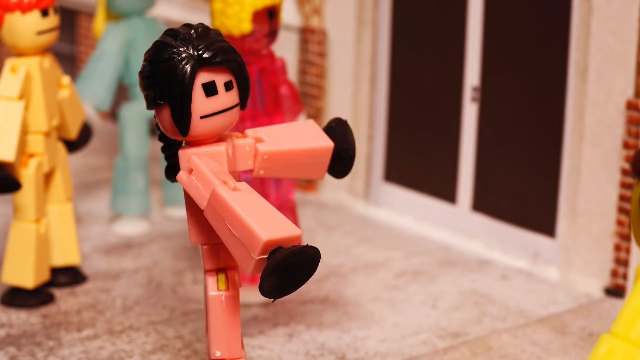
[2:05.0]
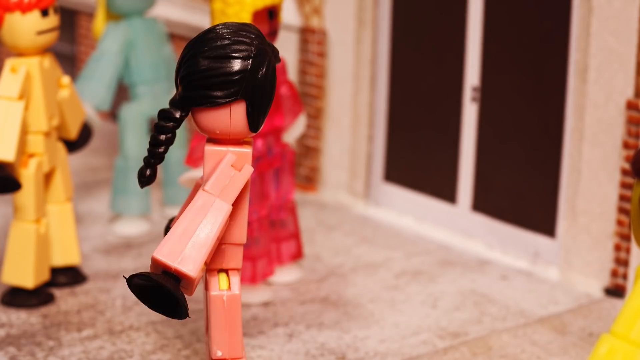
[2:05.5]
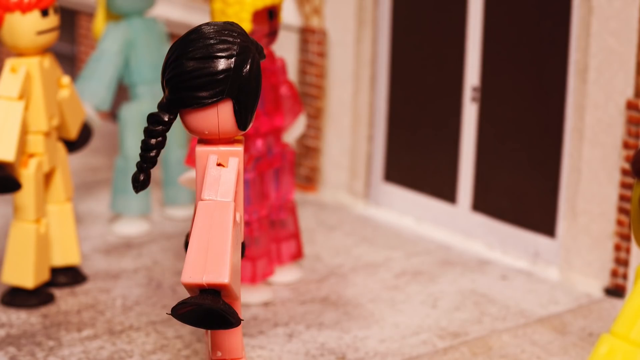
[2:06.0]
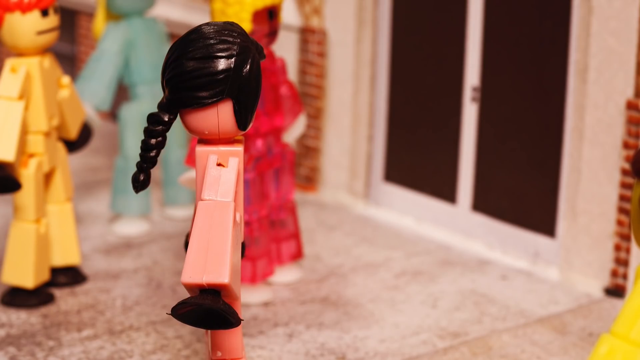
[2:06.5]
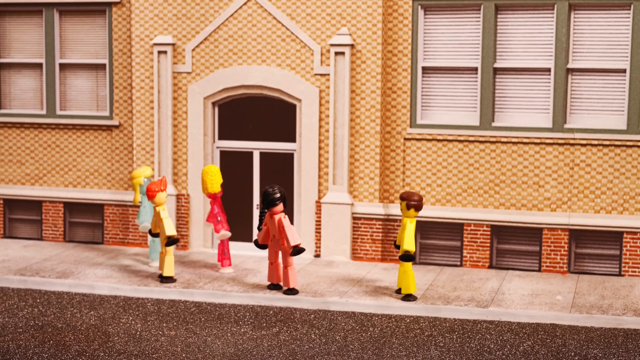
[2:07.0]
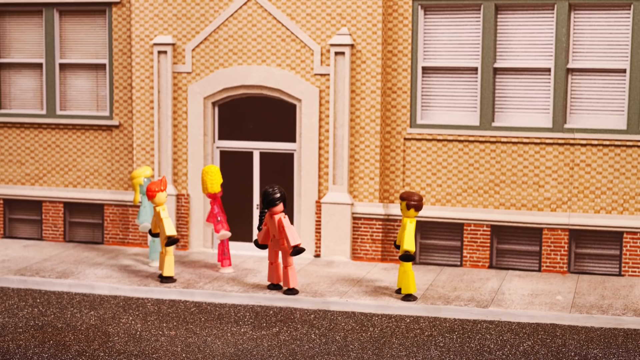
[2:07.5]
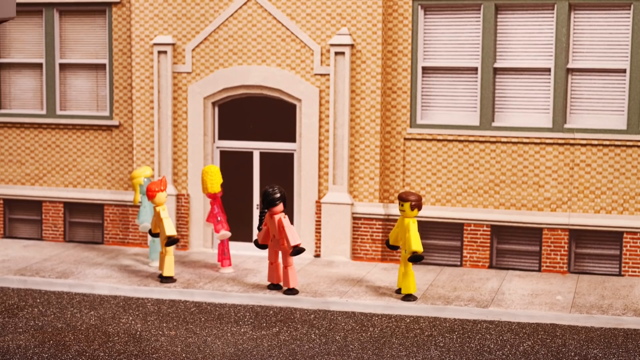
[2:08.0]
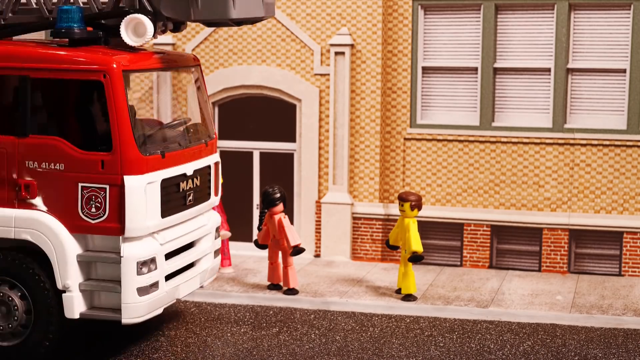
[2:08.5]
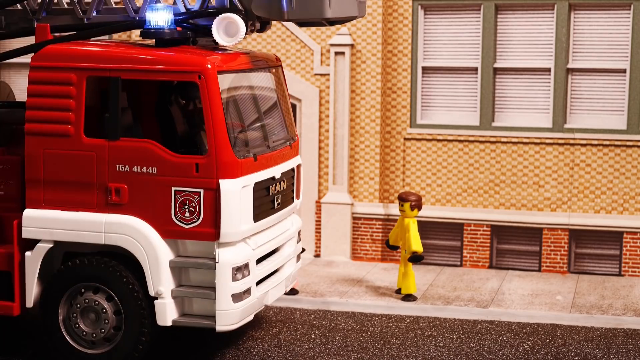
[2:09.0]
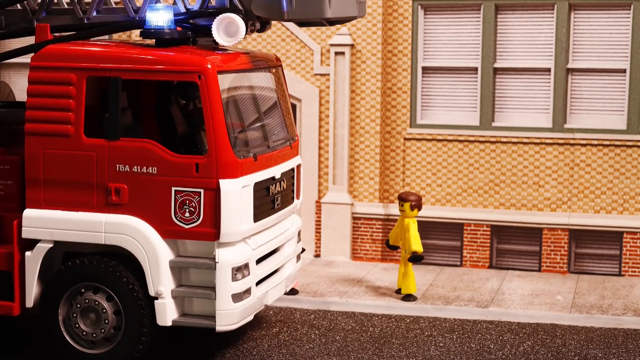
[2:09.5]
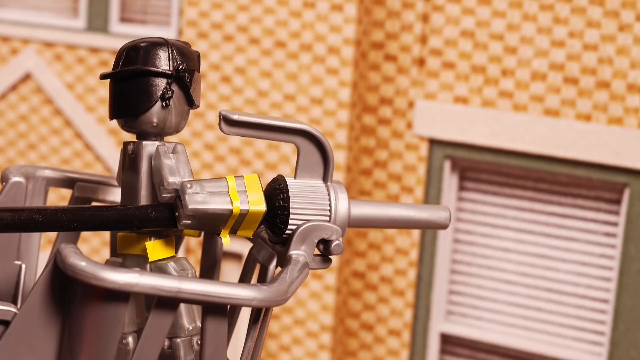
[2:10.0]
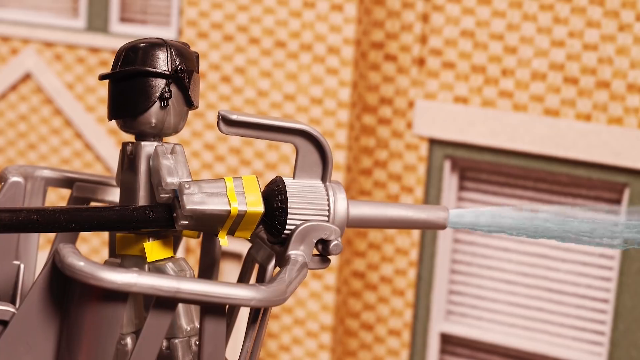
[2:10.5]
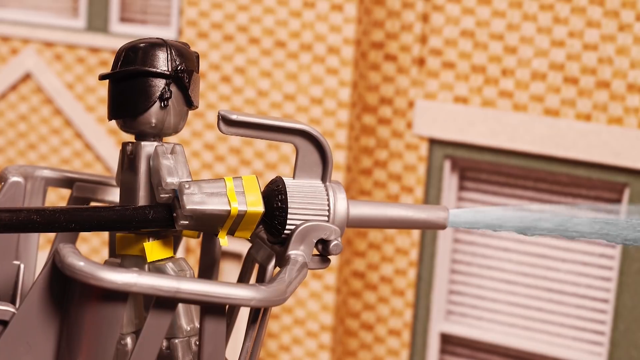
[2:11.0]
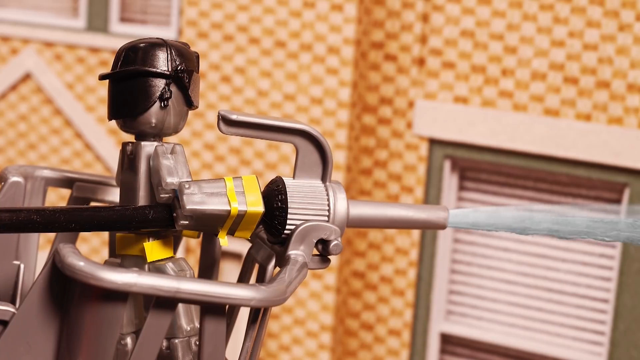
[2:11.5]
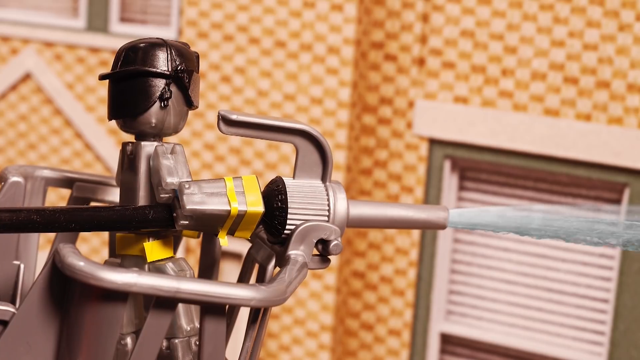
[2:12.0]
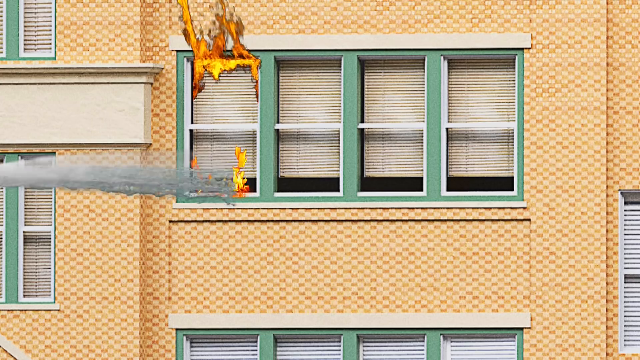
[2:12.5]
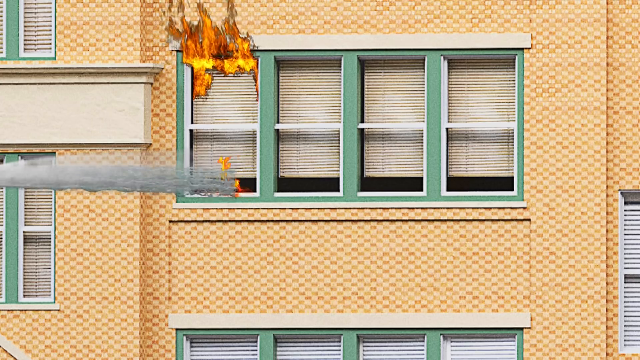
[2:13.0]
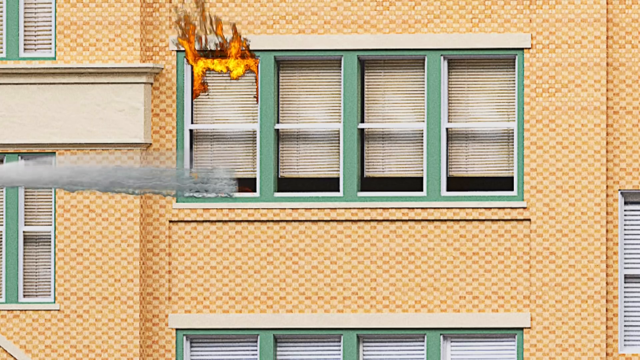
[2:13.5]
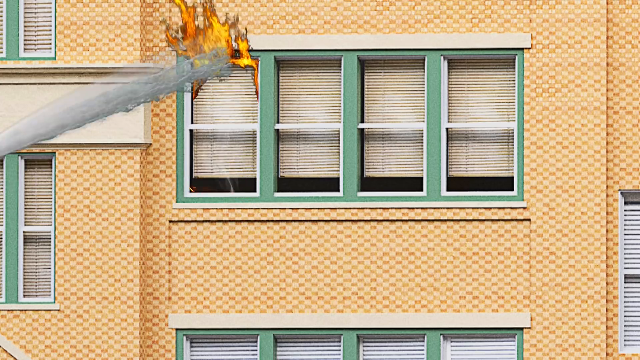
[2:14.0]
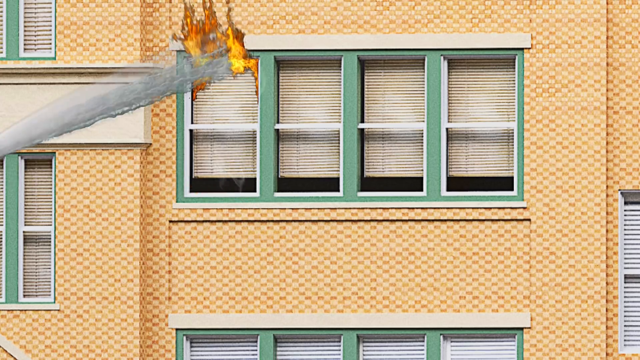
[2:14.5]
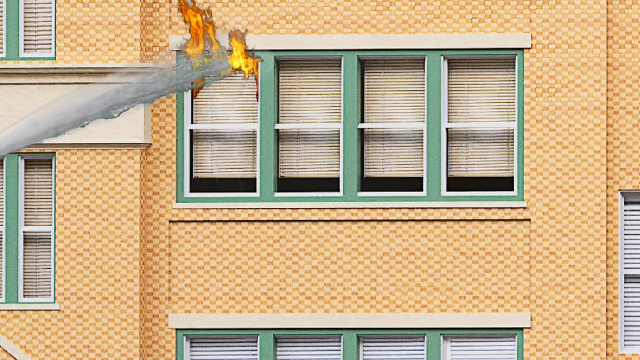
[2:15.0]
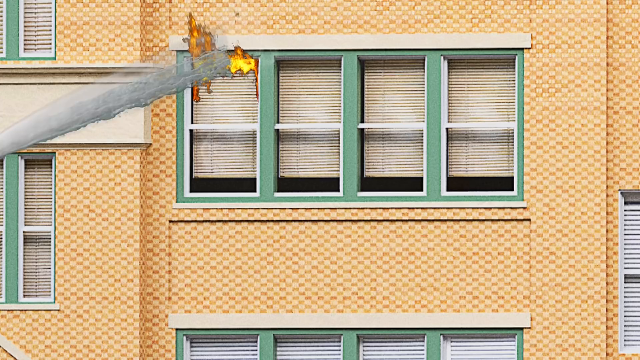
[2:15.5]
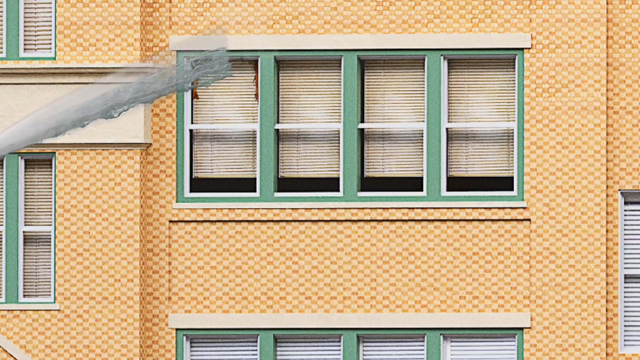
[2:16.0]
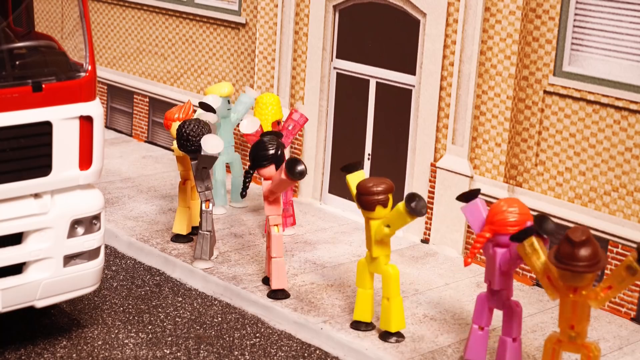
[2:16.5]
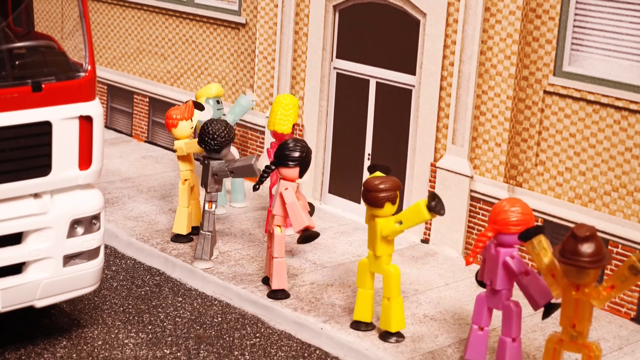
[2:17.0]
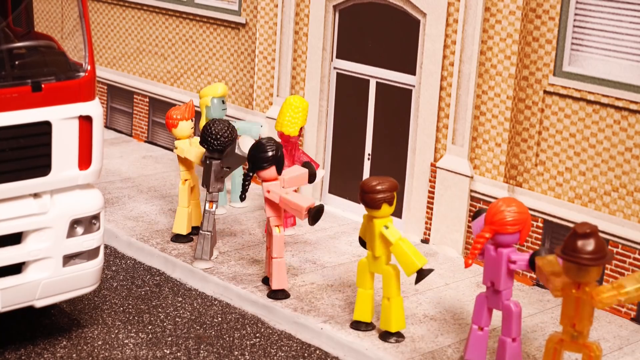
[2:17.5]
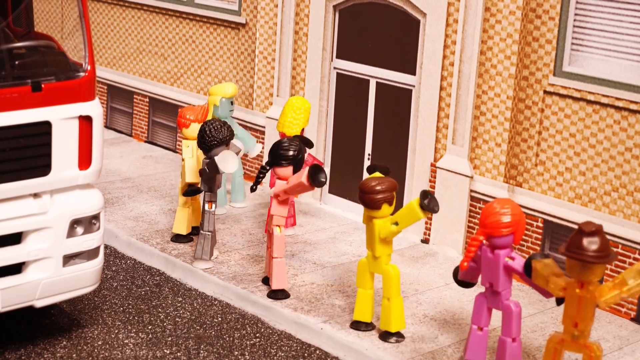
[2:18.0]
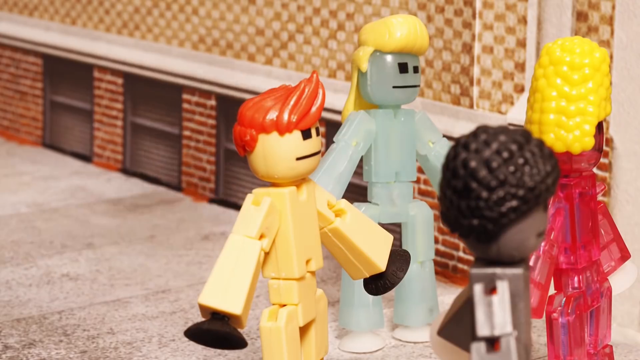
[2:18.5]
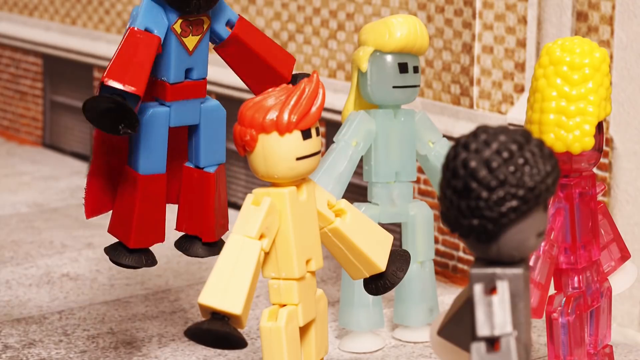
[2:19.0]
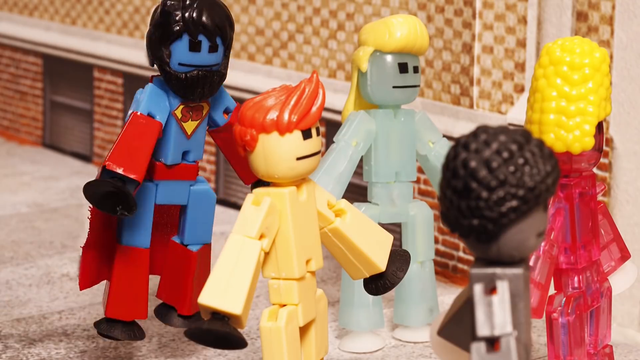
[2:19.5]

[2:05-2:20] The scene focuses on a robot-like humanoid figure that is pink with long, black, braided hair. A bunch of these figurines are on a sidewalk, standing in front of a building, all looking up. One of them looks over to the road and spots a red firetruck. The front of the firetruck says "man", and there are some numbers on its side. On top of the firetruck is a silvery, metallic-looking figurine wearing a black helmet. A fire hose shoots out water and puts out the flames on the window. The people on the sidewalk begin cheering, raising their limbs in the air and kind of waving them around. The Superman figure flies down to stand next to them.